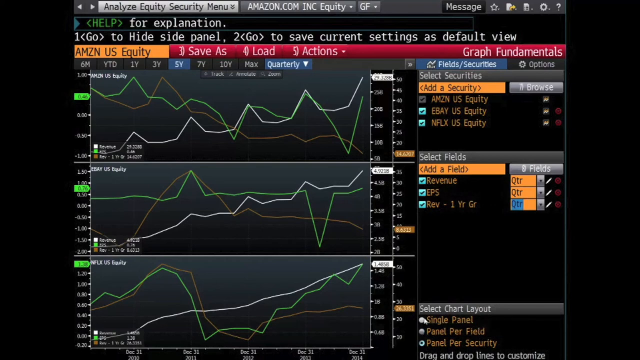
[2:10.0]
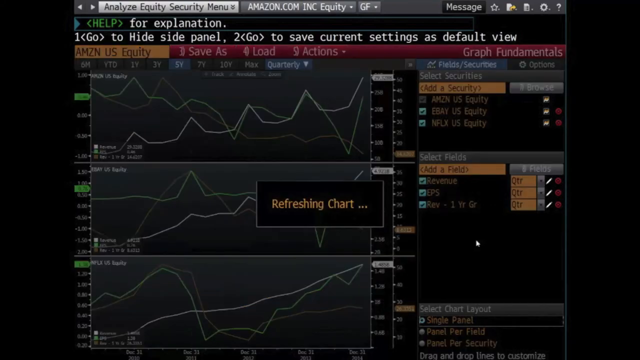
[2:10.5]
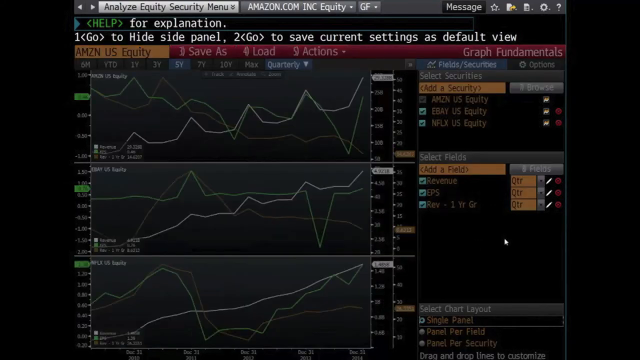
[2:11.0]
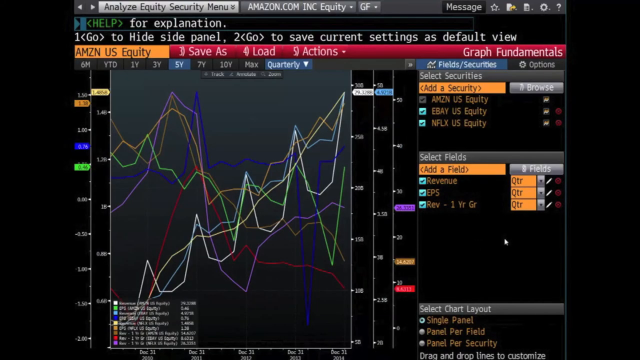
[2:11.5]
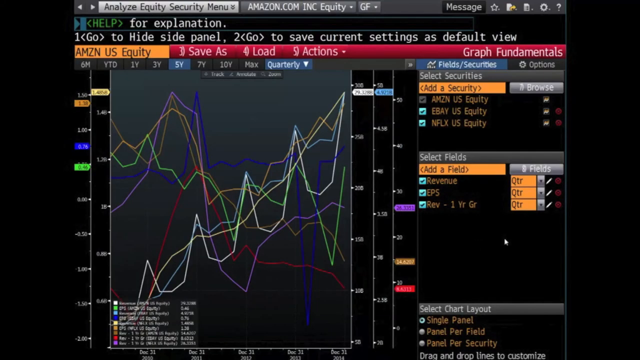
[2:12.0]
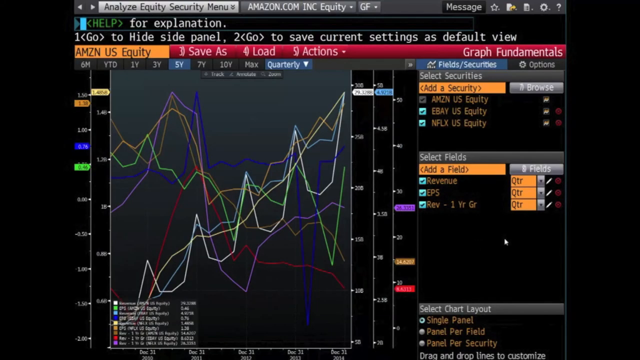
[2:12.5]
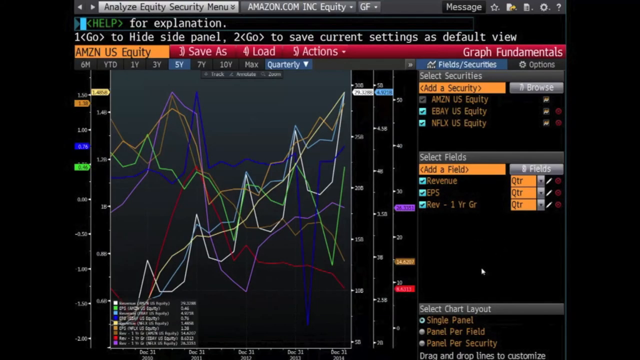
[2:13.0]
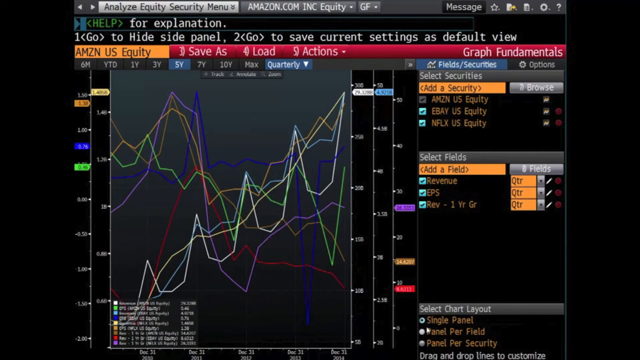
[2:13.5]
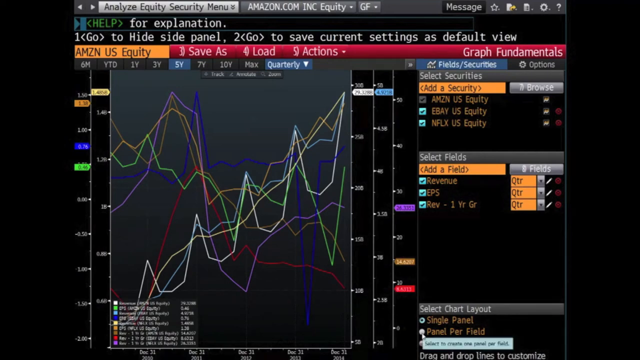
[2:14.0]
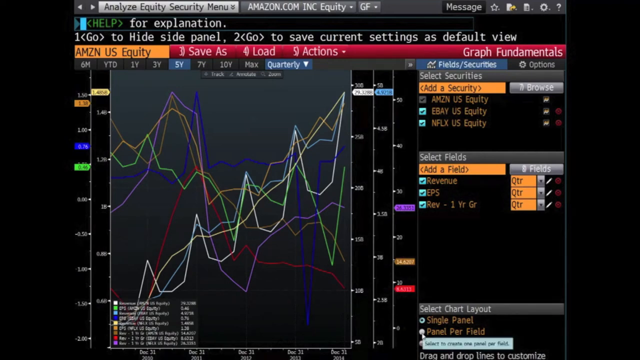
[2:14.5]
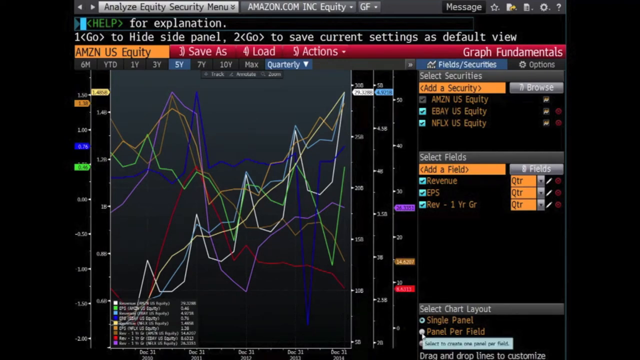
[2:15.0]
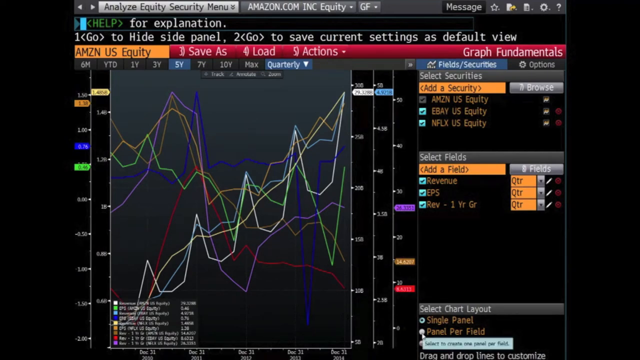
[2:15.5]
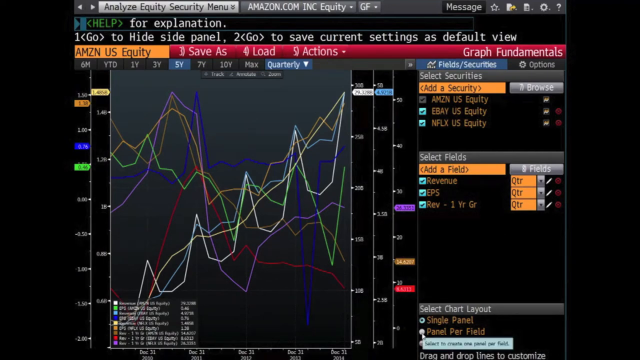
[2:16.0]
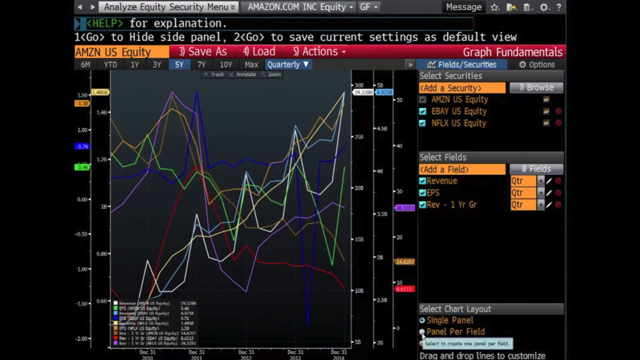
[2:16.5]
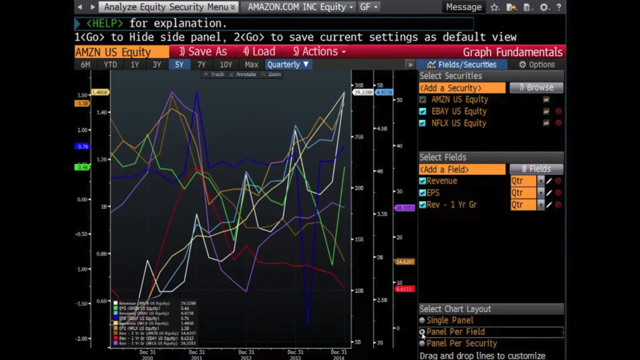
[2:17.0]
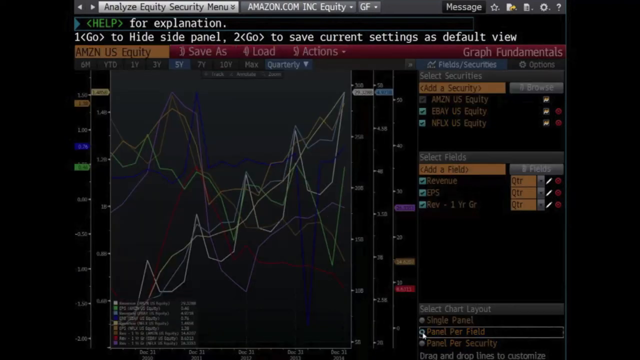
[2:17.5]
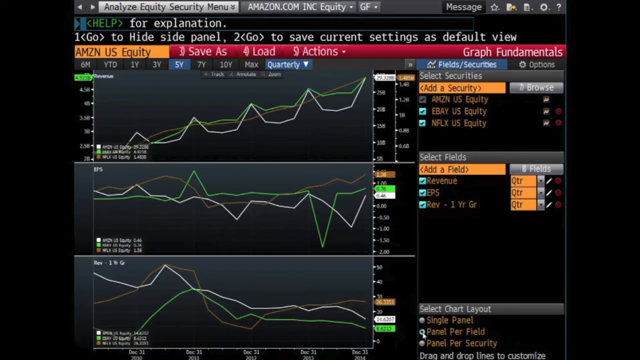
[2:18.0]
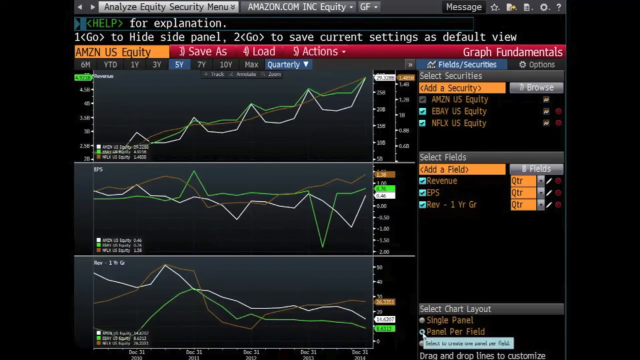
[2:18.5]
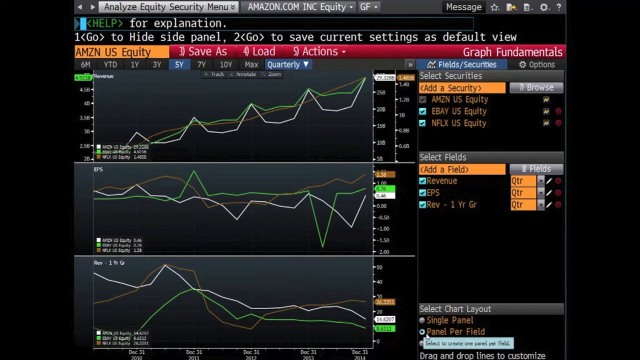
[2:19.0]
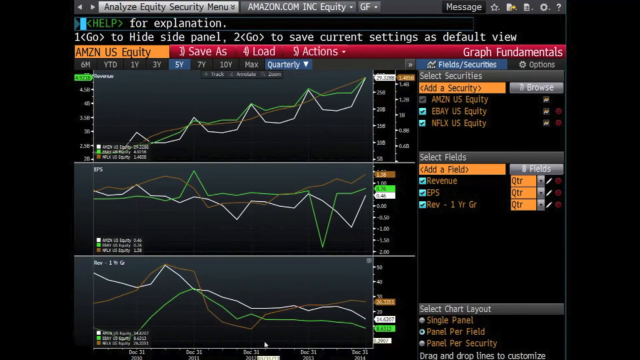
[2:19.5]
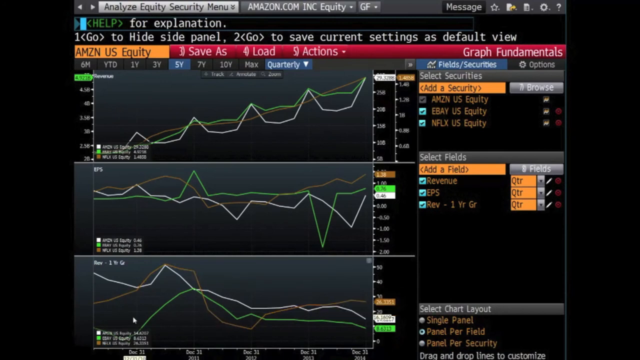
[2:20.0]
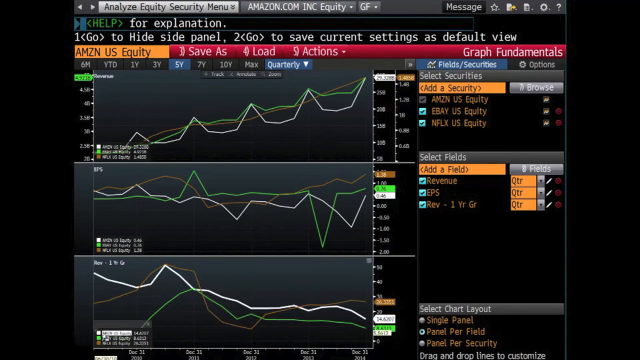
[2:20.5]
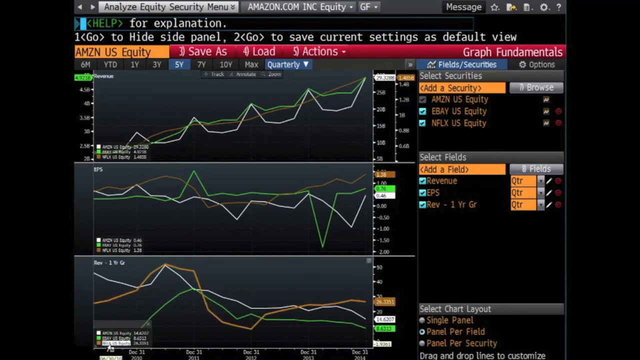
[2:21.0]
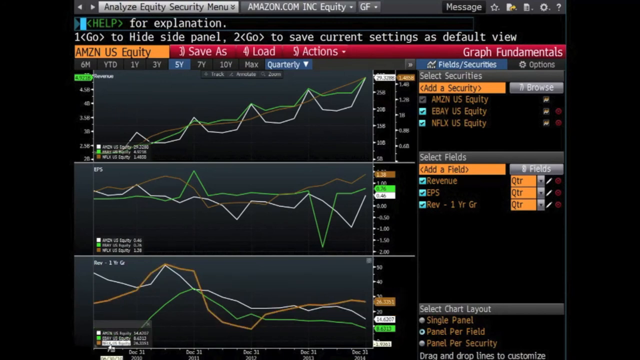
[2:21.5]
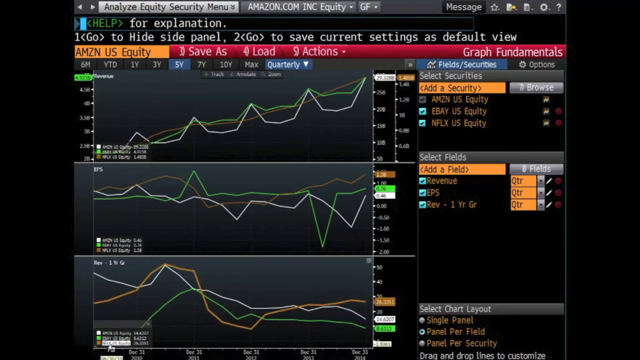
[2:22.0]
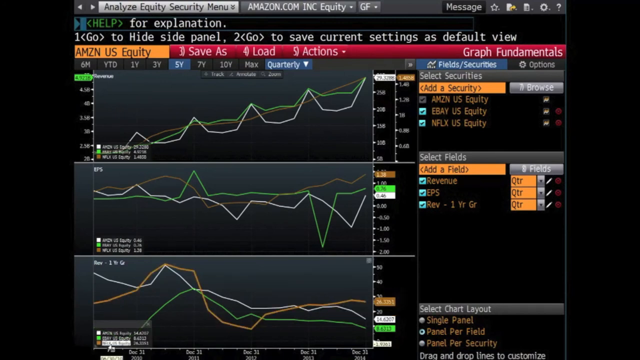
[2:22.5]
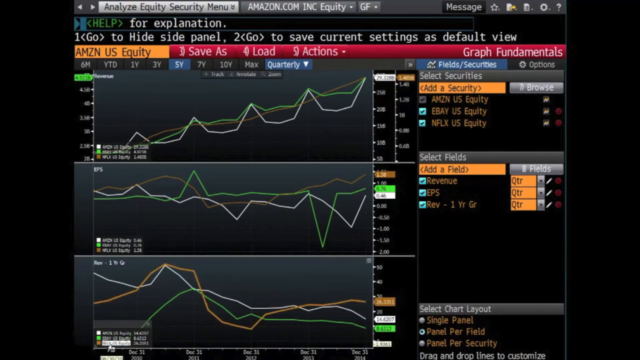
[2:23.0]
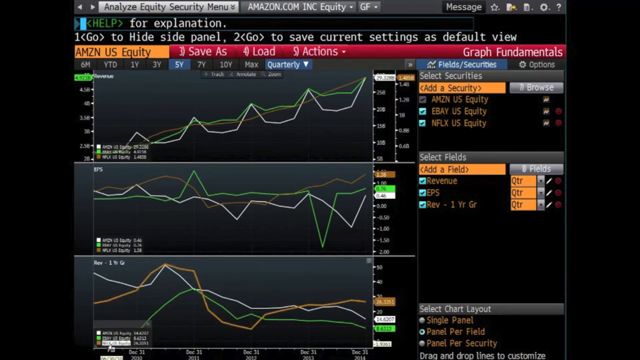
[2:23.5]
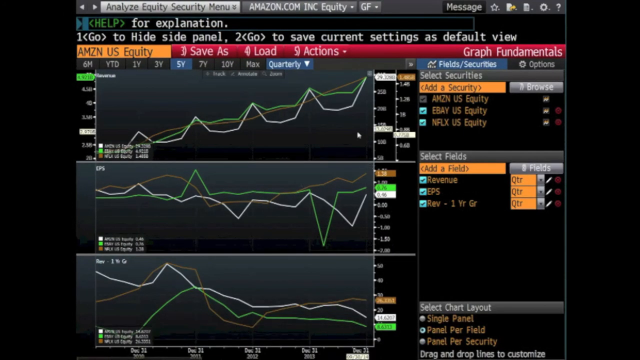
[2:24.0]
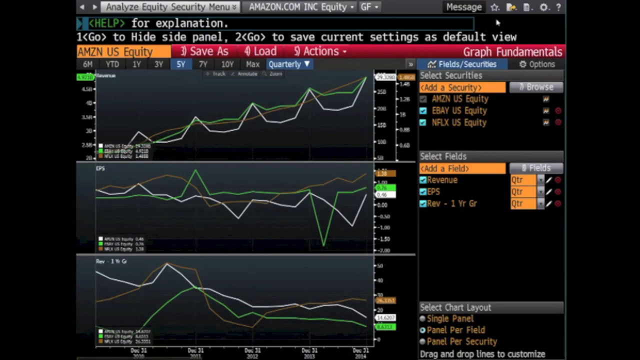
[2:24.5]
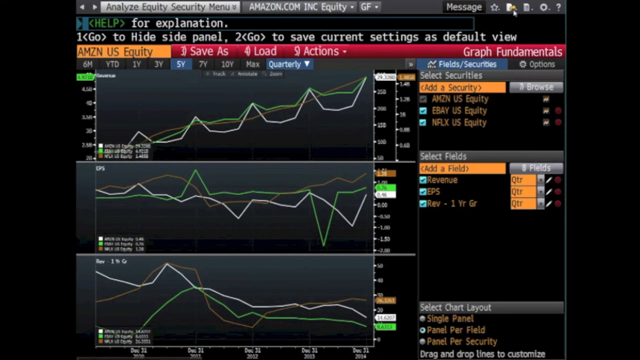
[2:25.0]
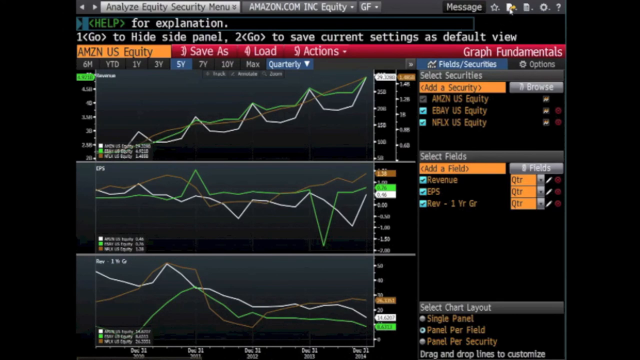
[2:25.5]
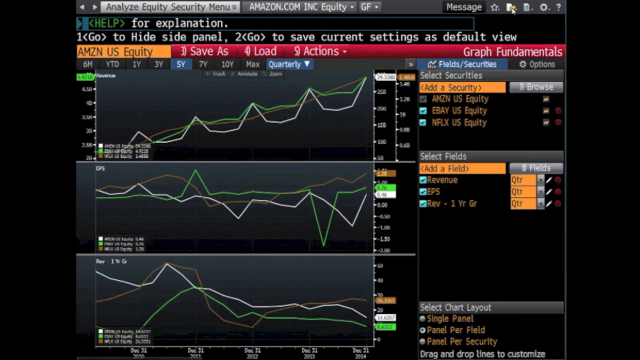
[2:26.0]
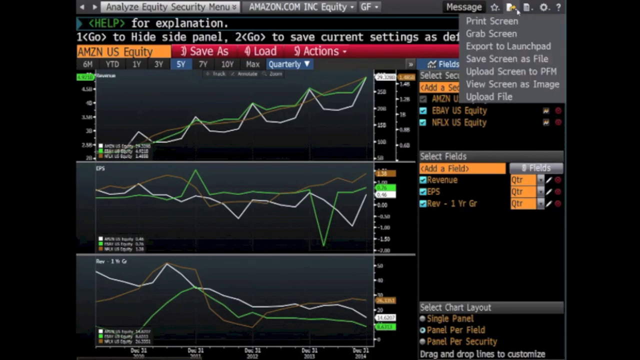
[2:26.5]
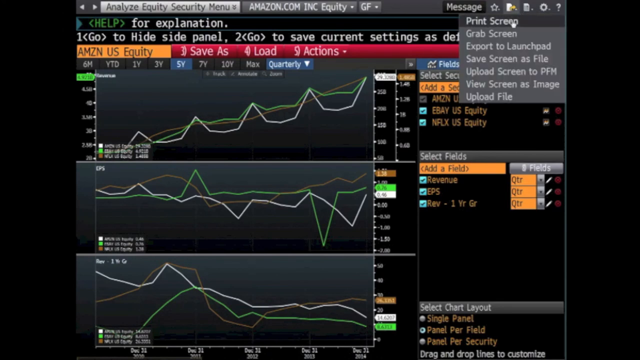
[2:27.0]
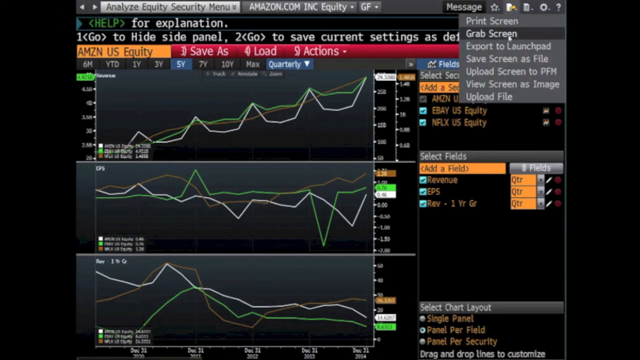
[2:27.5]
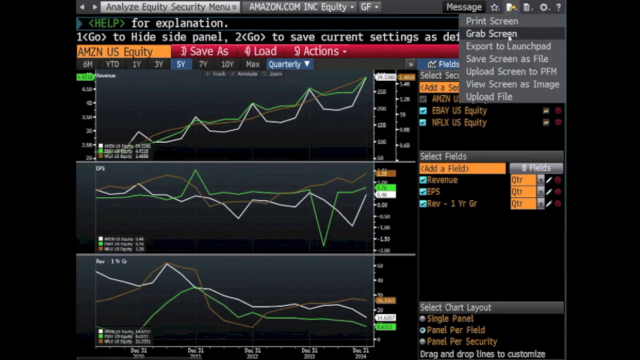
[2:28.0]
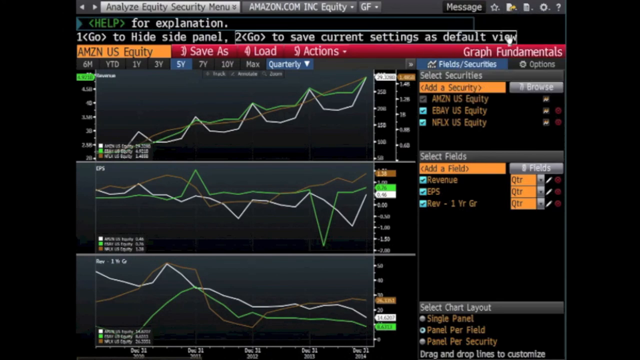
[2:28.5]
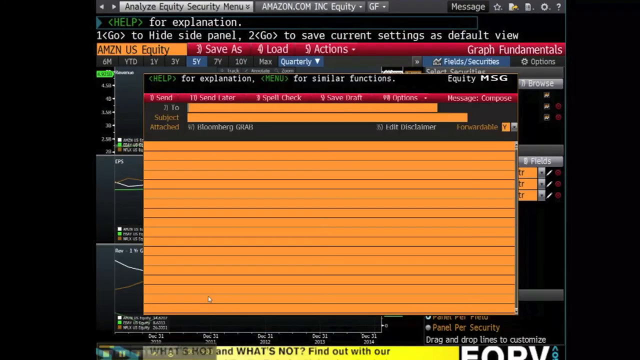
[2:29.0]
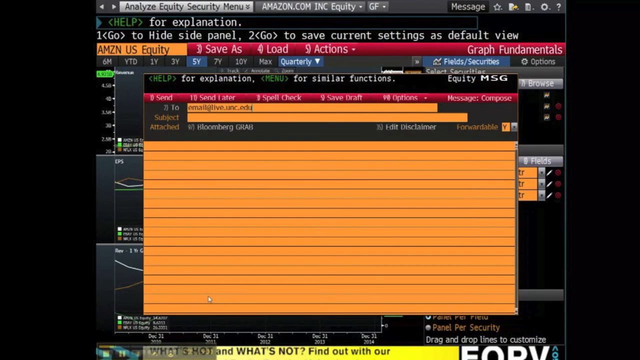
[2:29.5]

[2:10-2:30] A person uses software that compares companies on things like revenue, EPS and revenue growth year over year. At the very beginning, there are three graphs of securities from Amazon, eBay and Netflix, each containing three lines: revenue, EPS and revenue one-year growth. The person changes the chart layout to a single panel with nine lines, each corresponding to a different field for a different company. The person then changes back to a panel-per-field layout, showing three panels, apparently one each for revenue, EPS and revenue one-year growth, with each line belonging to a different company. The person then clicks on a function at the top right of the screen and selects an option called GrabScreen.